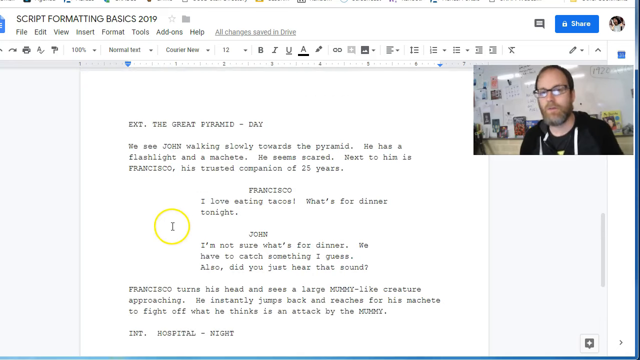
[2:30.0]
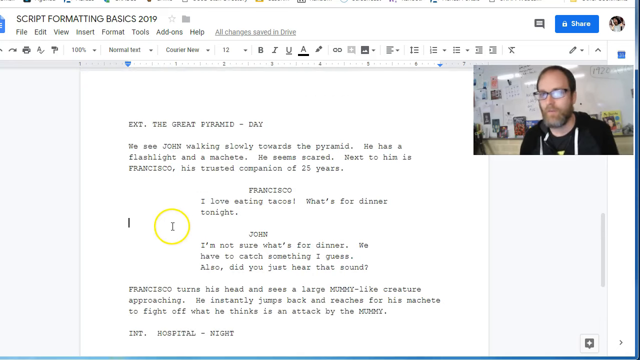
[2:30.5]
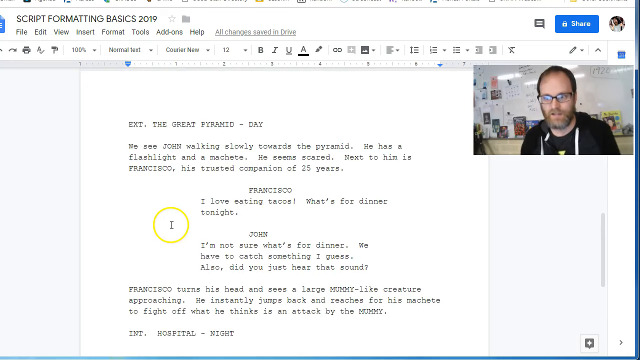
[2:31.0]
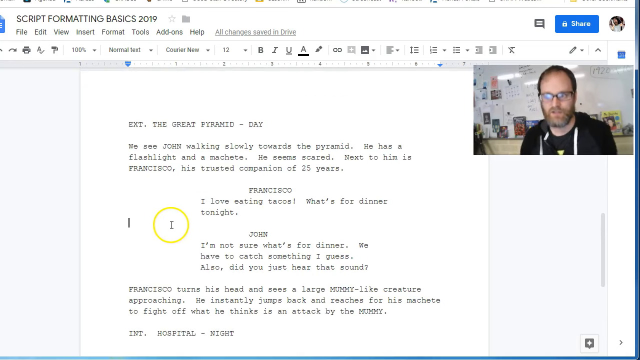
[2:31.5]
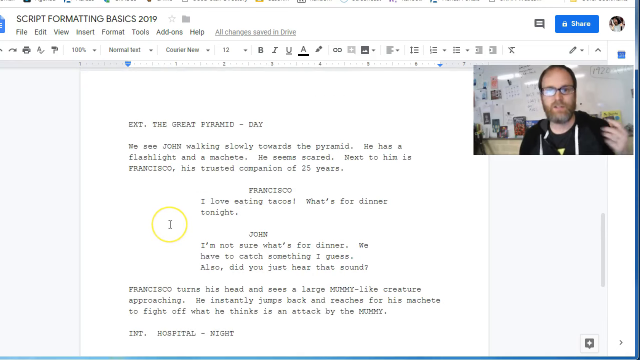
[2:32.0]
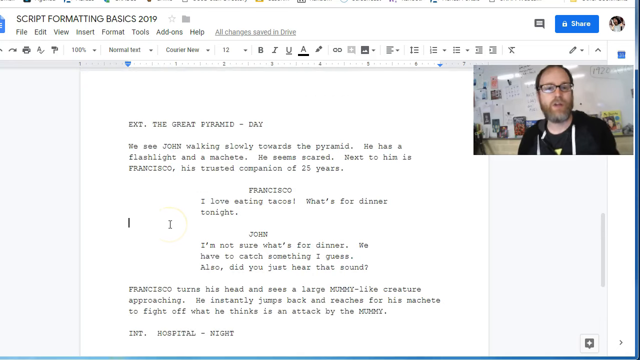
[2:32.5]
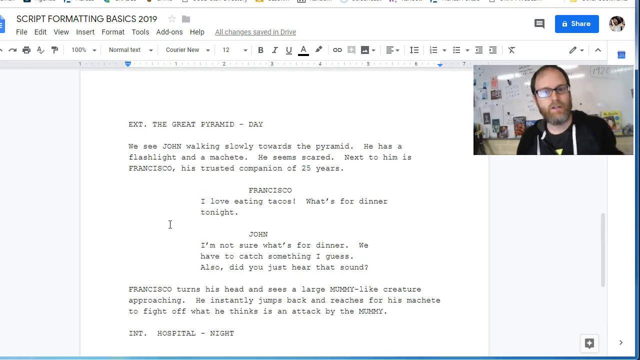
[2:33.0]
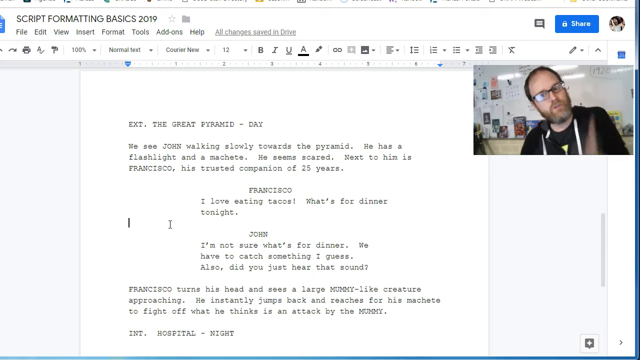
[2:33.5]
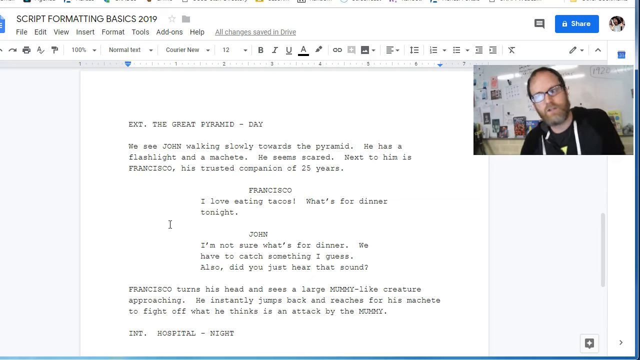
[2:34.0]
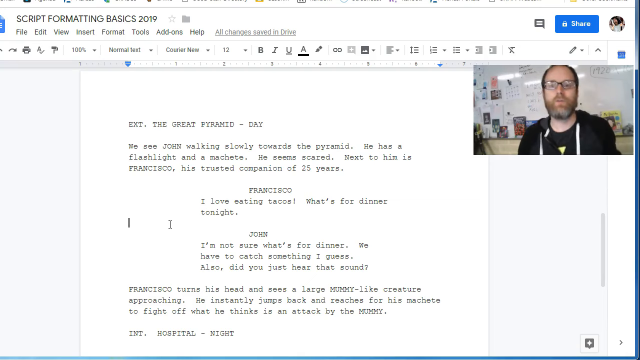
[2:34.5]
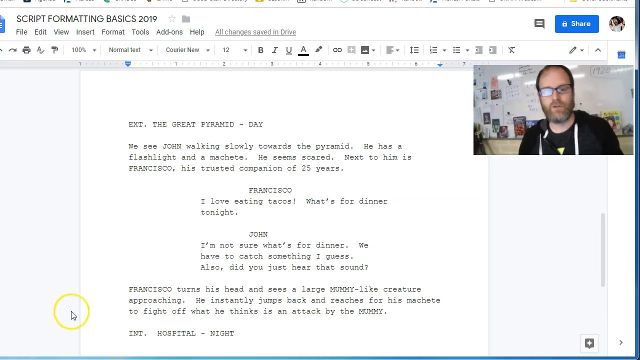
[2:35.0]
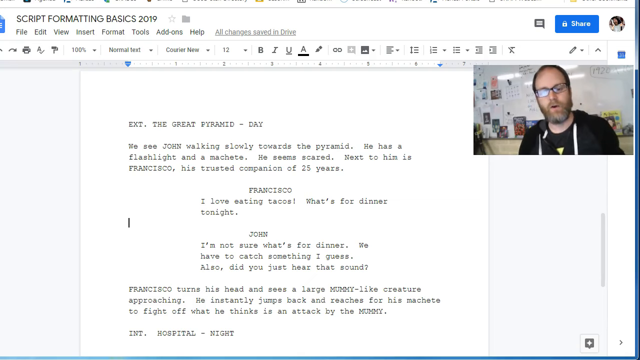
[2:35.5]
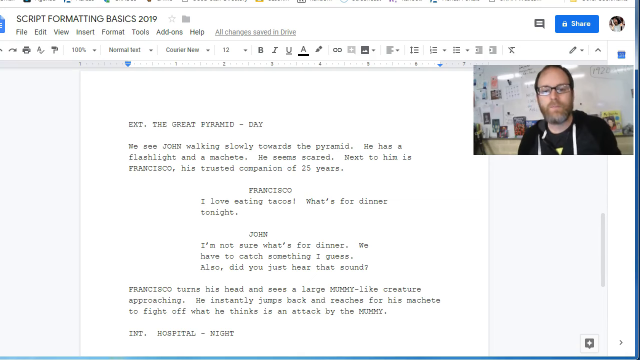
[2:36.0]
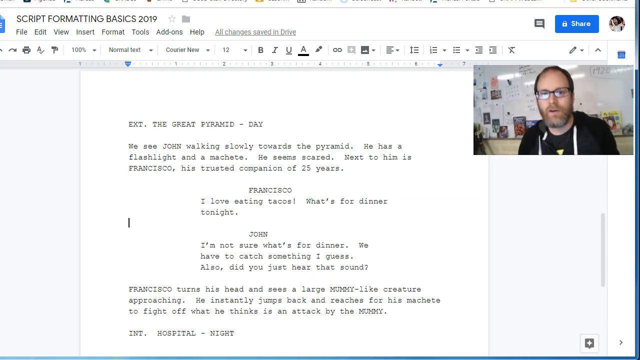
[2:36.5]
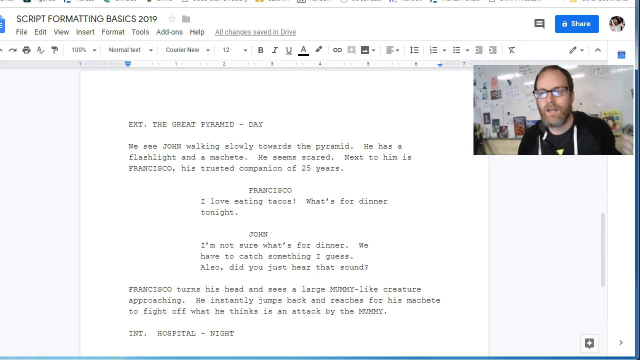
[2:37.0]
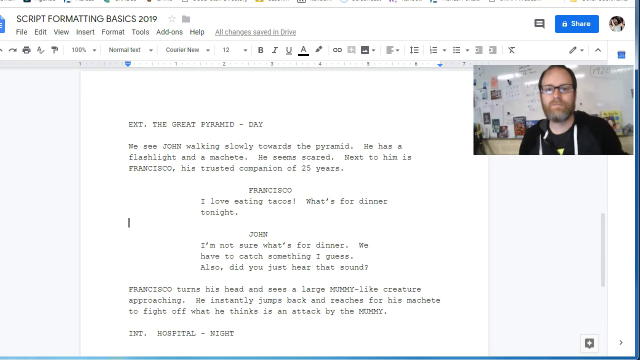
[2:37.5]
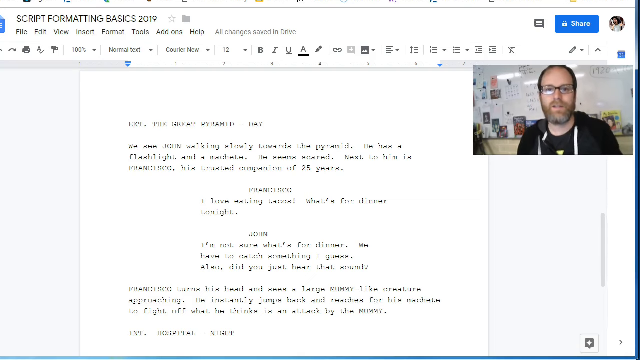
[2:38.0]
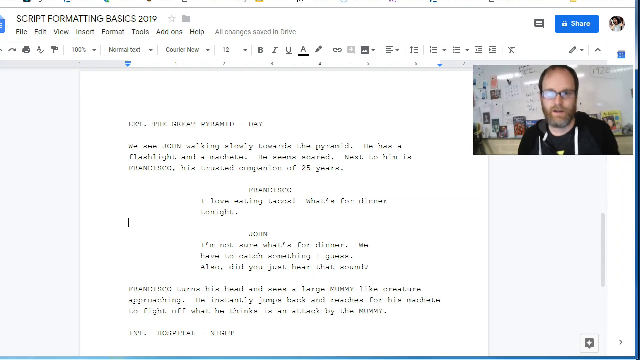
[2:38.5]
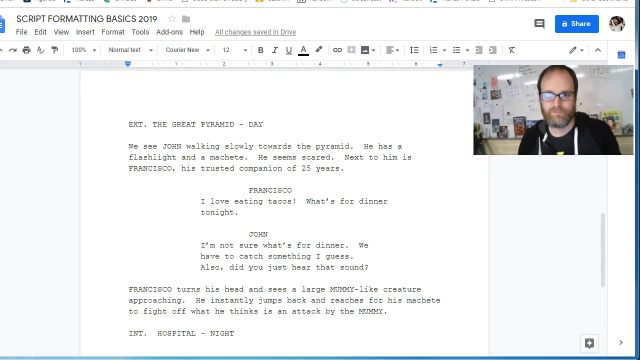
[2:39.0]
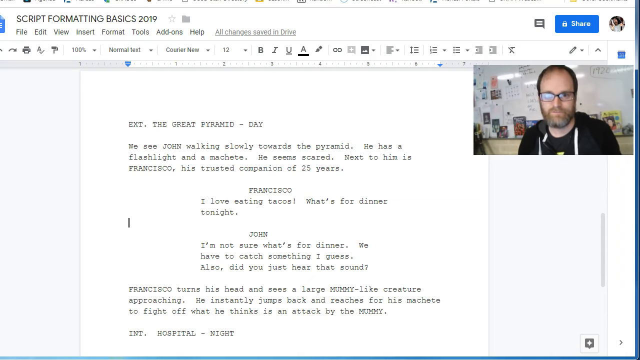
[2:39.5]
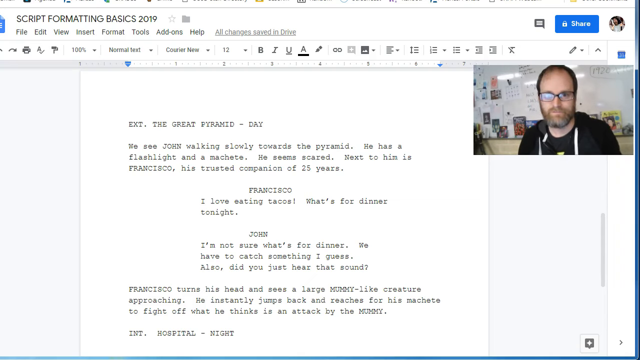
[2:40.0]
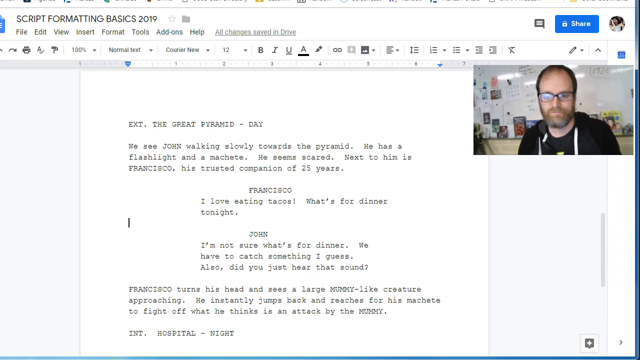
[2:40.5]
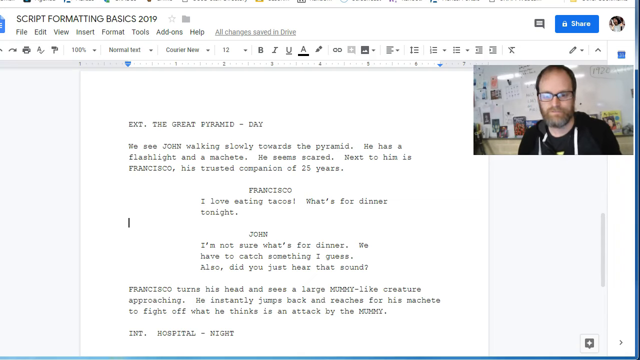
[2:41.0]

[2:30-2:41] The cursor blinks at the far left edge, between the last line of Francisco's text and John. The yellow circle around the cursor comes and goes as it moves, and then the cursor is out of the picture. The man looks down at the computer as he talks, and a reflection of the computer is visible. He scrolls down a little, then back up slightly, making a small left-hand karate chop; mostly only a bit of his fingers is visible, as the view focuses on his upper body. The cursor remains blinking between the last line of Francisco and John.